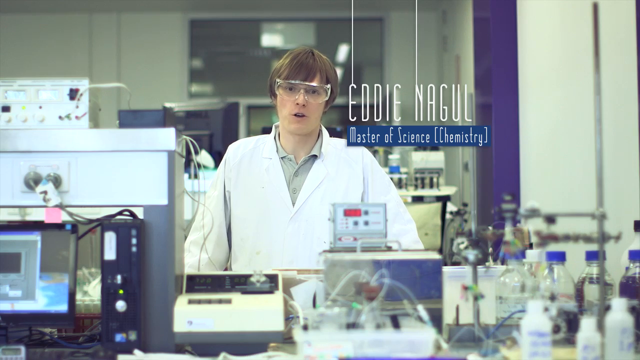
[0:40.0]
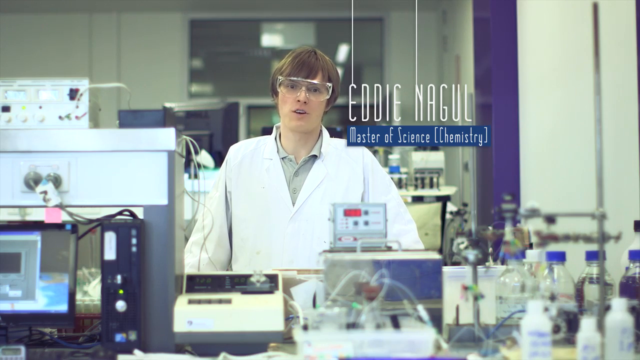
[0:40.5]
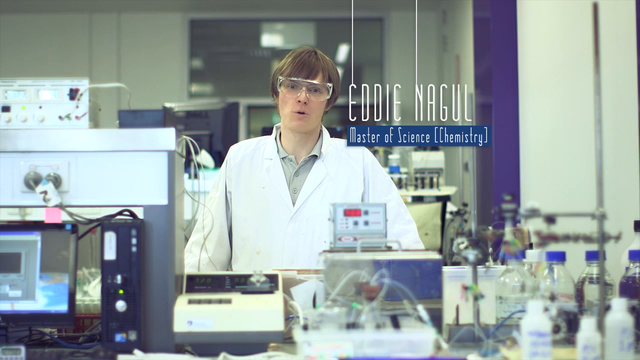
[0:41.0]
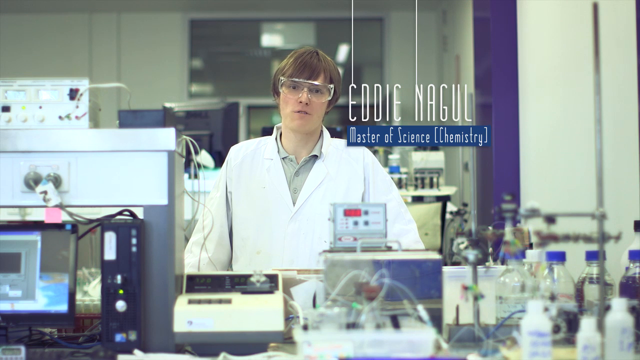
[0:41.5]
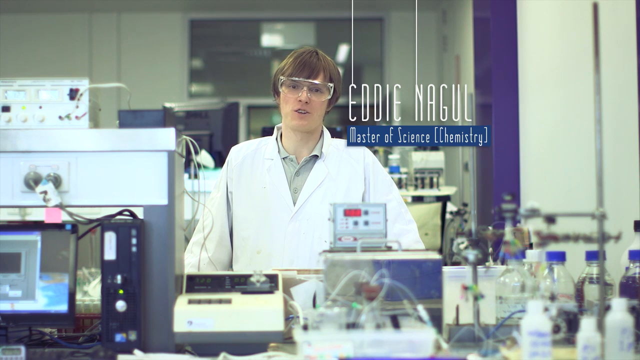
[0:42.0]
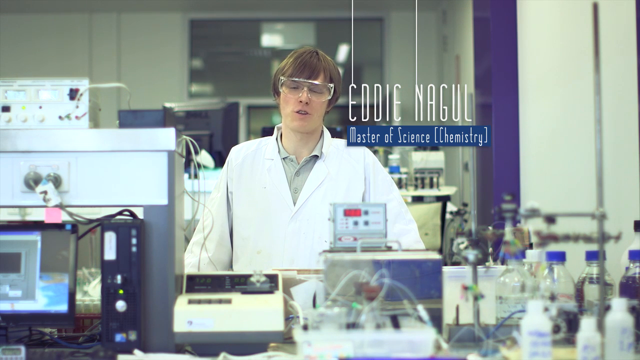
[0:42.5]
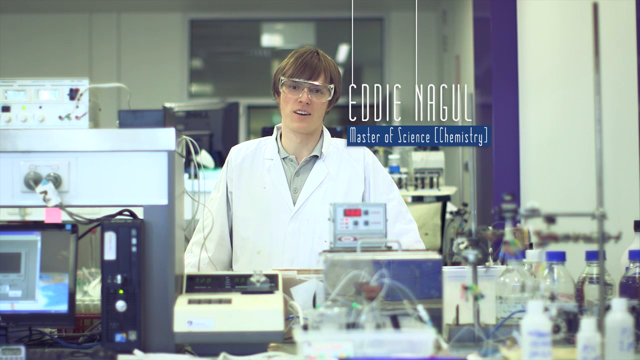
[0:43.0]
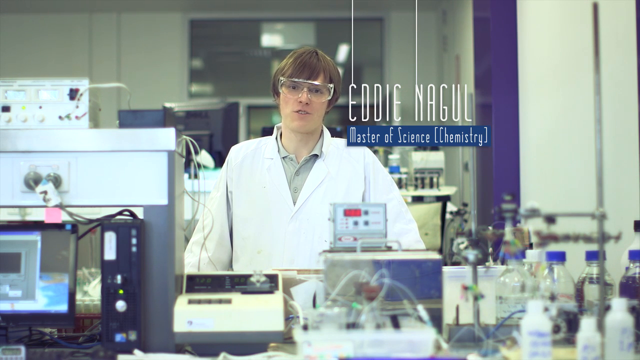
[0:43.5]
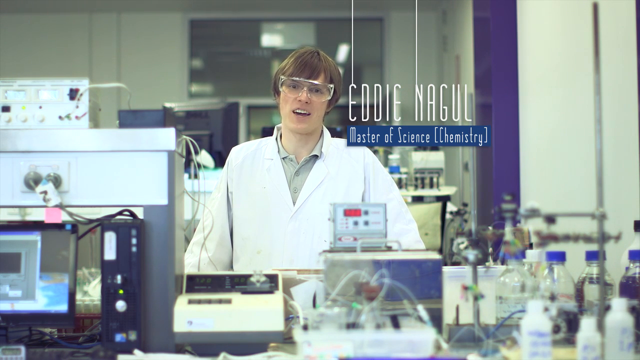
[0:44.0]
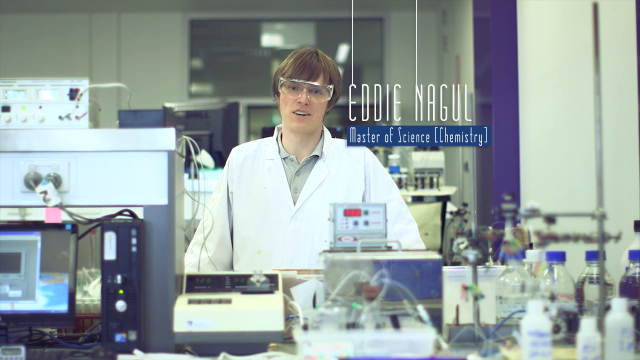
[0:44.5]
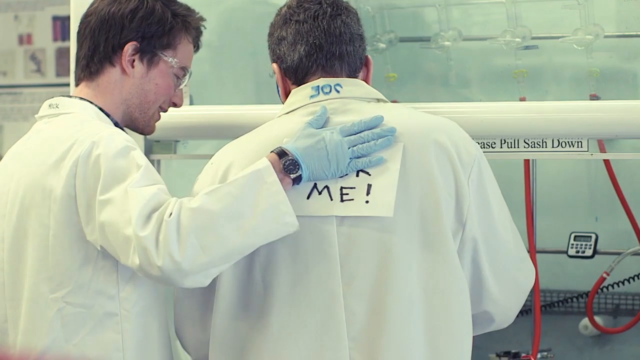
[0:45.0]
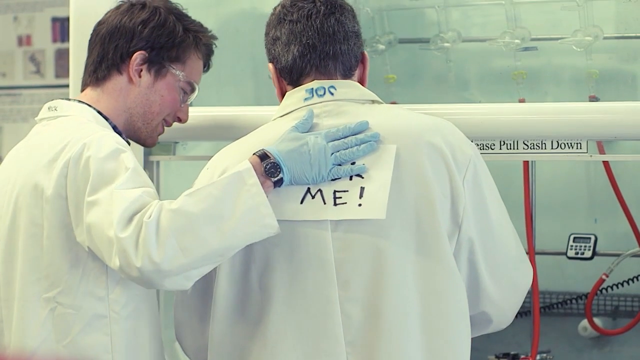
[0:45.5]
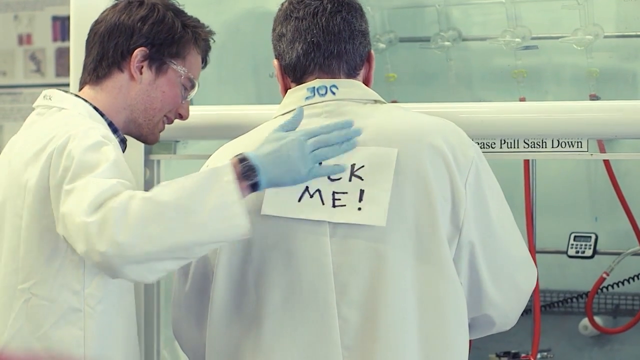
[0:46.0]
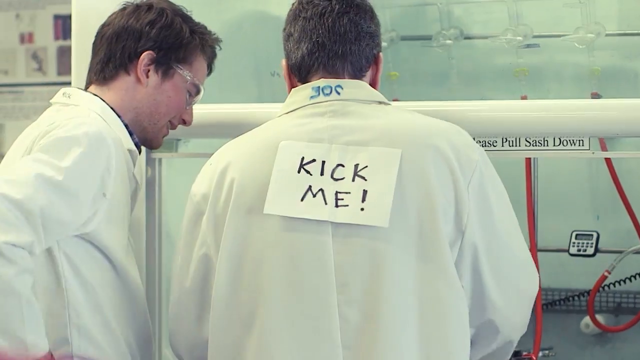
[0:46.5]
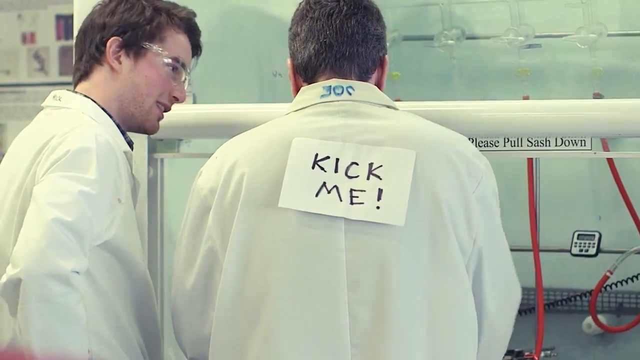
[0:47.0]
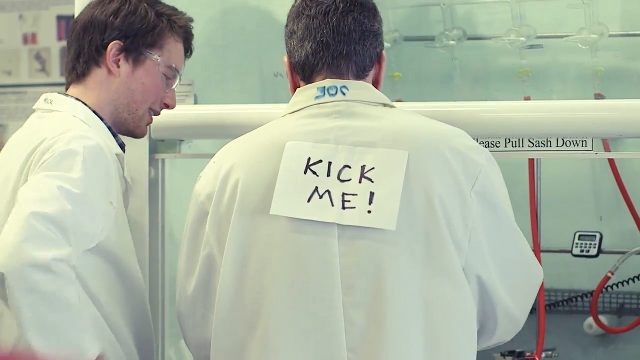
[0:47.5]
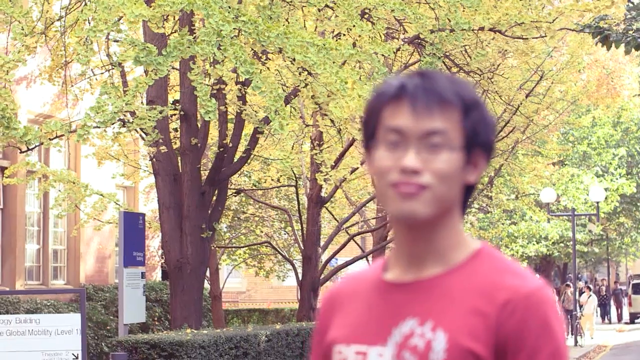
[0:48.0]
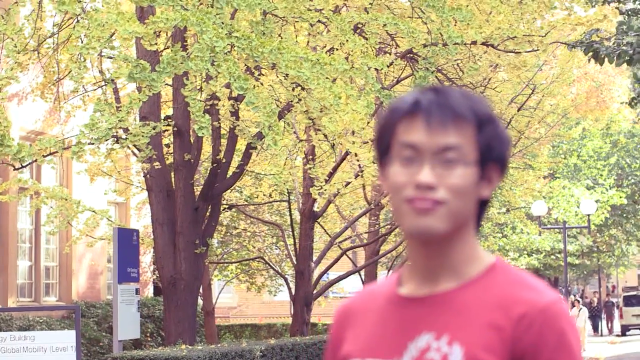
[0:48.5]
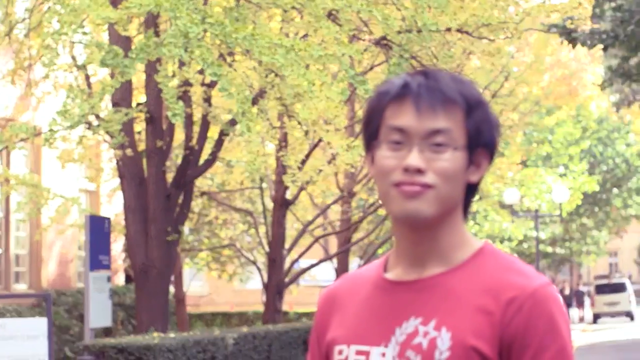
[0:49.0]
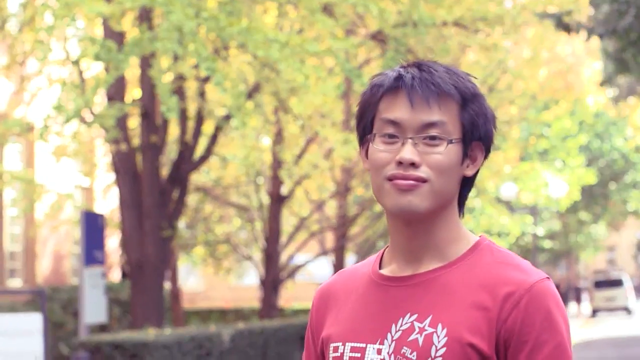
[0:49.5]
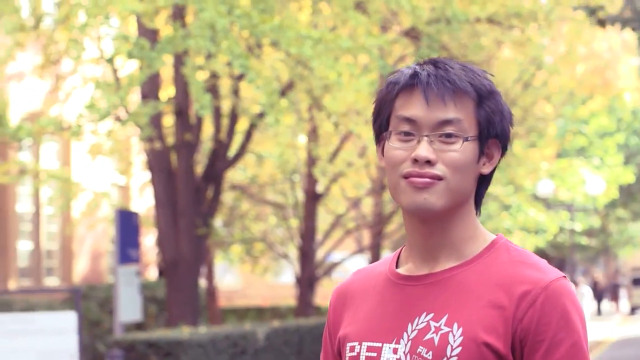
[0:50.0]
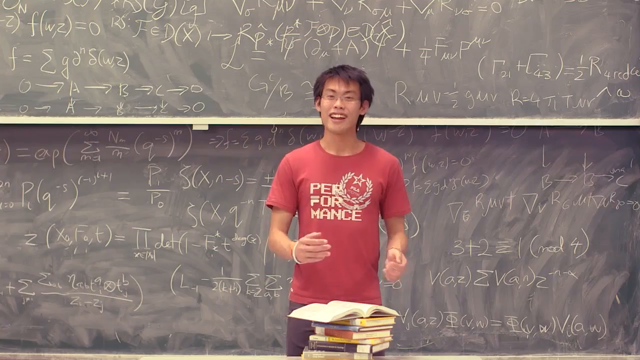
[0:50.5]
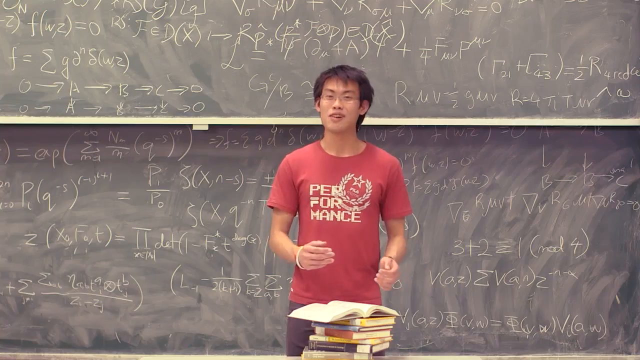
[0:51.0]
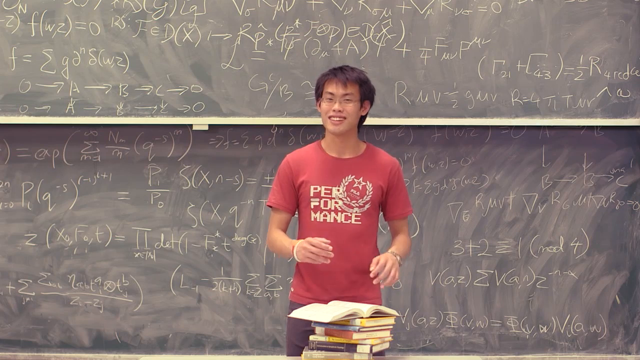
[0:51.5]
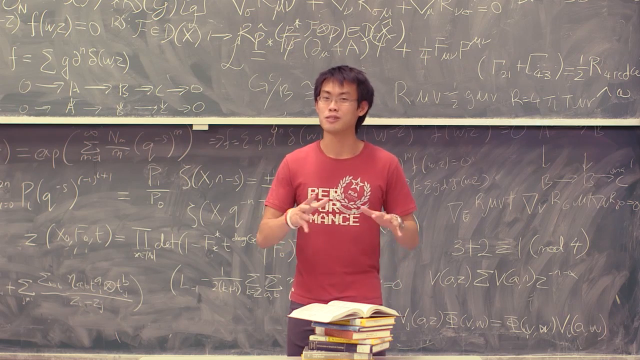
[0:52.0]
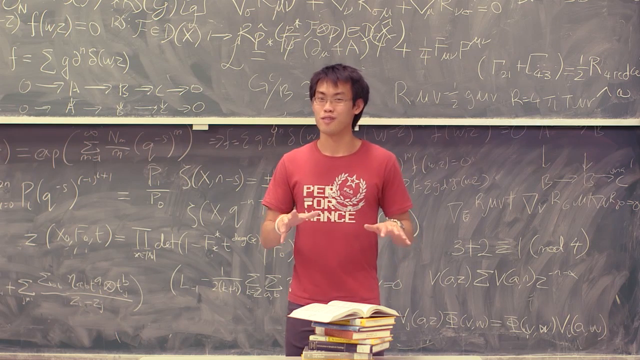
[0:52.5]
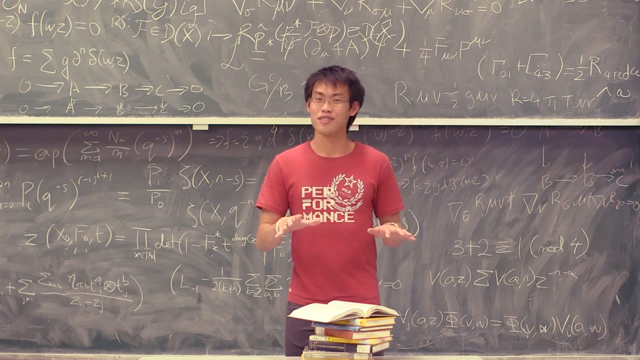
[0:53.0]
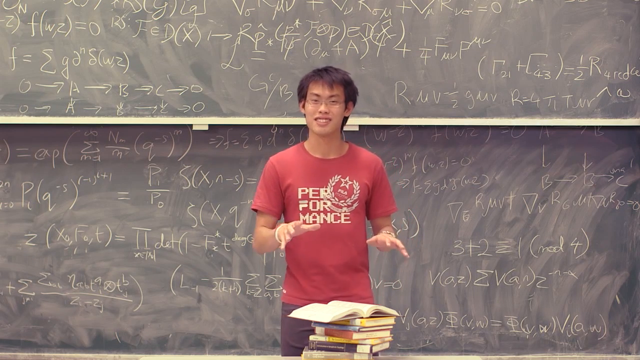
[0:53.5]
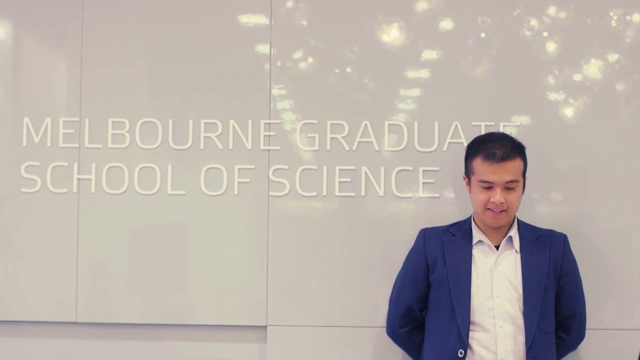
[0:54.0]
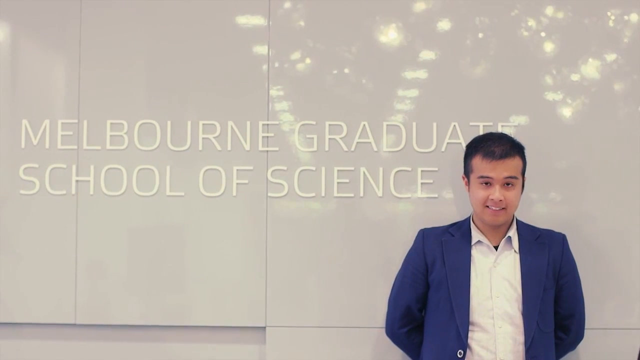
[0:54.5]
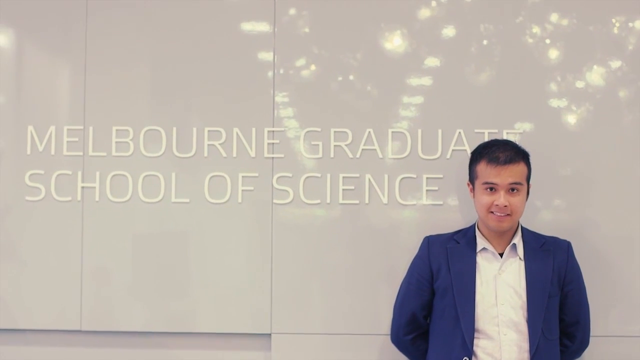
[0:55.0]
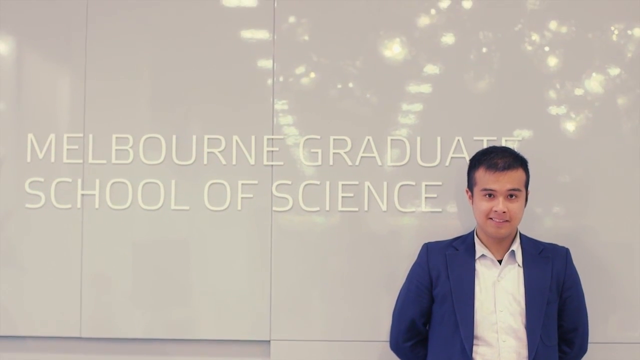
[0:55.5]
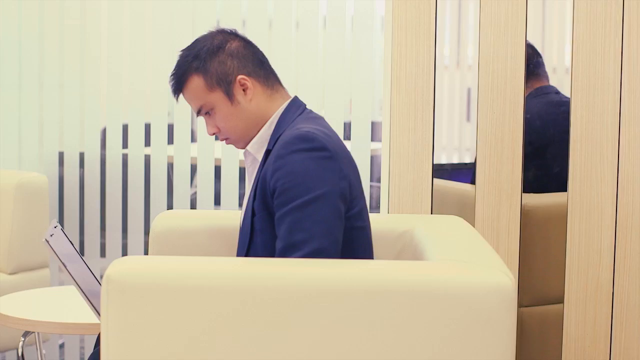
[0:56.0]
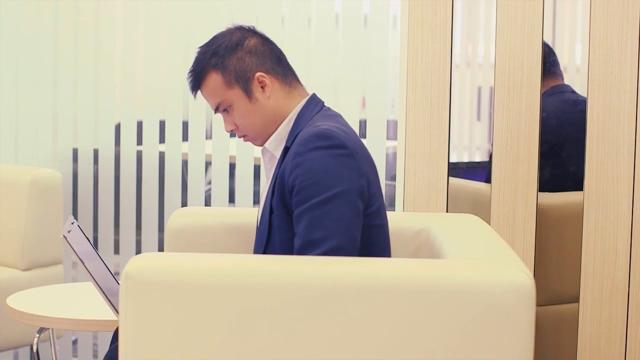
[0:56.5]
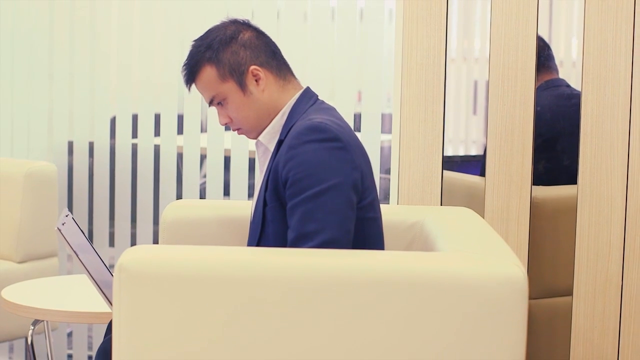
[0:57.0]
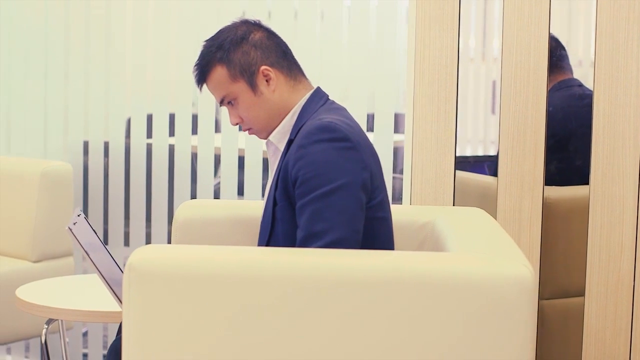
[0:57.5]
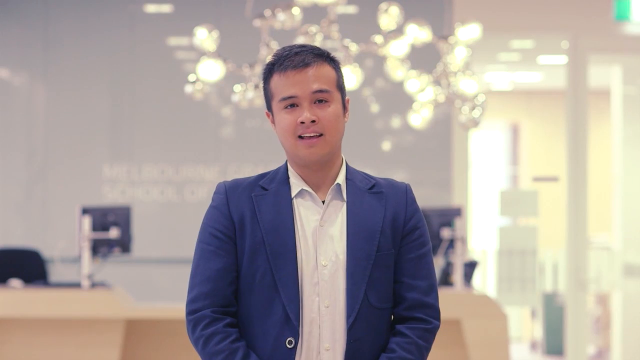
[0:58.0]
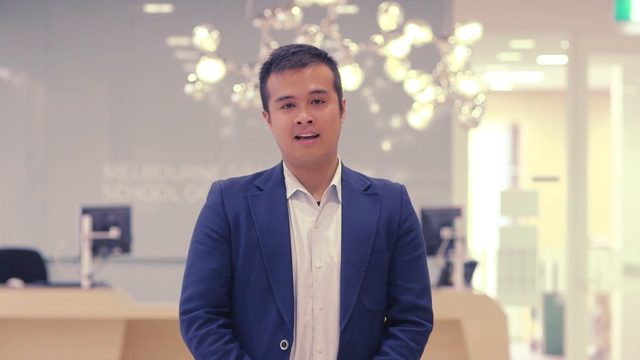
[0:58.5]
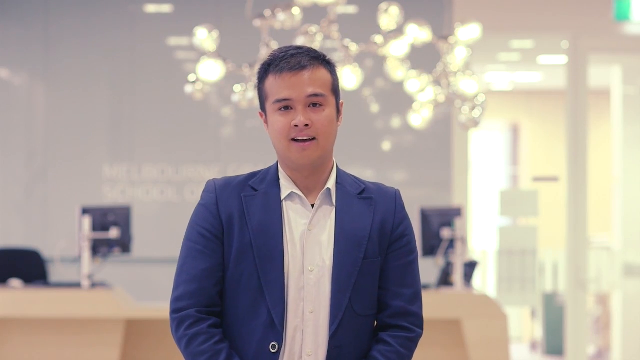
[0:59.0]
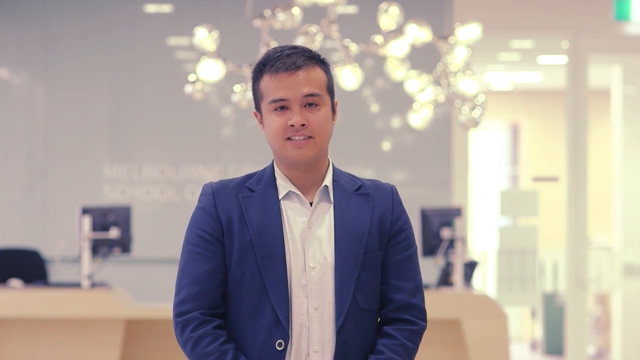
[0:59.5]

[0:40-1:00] Eddie Nagel speaks into the camera. He appears to have a bold haircut, and there is a lot of equipment around him in what seems to be a lab setting. Two lab technicians are seen from behind; one uses their right hand to tape a "kick me" sign to the back of the other's lab coat. An Asian man in a red shirt, apparently Joe Chan, seems to be giving a lecture in front of a large blackboard, with a stack of books in front of him and the top book open. A young man in a blazer and a white shirt stands in front of a building that reads "Melbourne Graduate School of Science". He is then seated in a chair indoors, seen in side profile with a laptop open in his lap, speaking directly to the camera again.